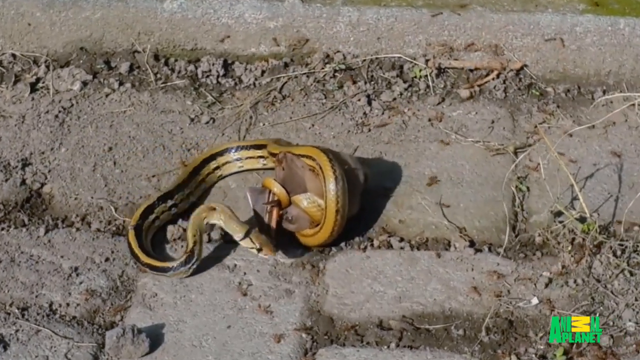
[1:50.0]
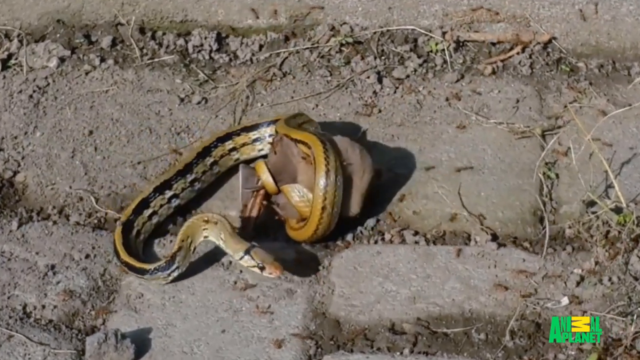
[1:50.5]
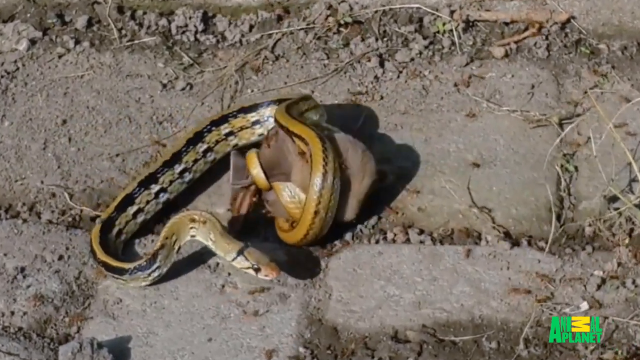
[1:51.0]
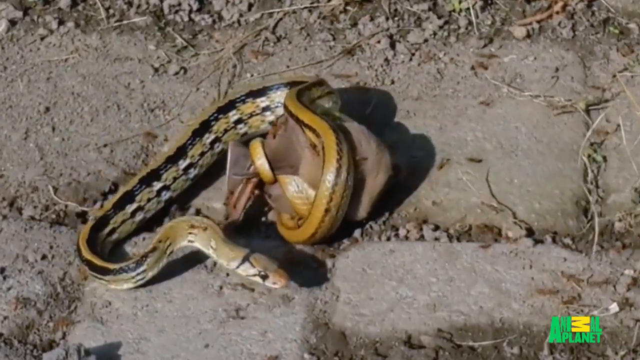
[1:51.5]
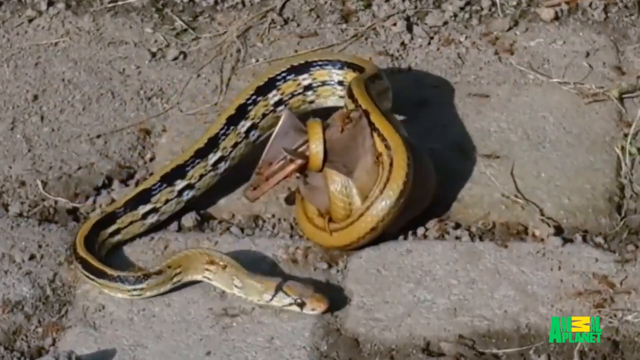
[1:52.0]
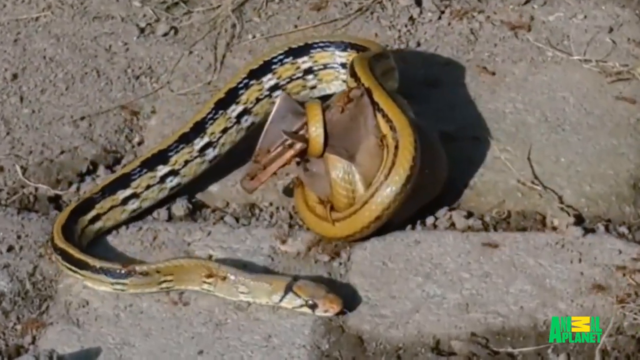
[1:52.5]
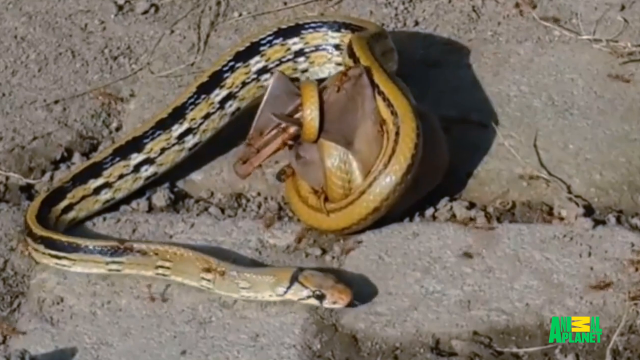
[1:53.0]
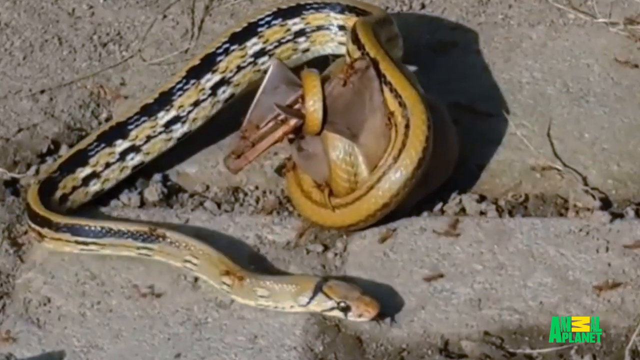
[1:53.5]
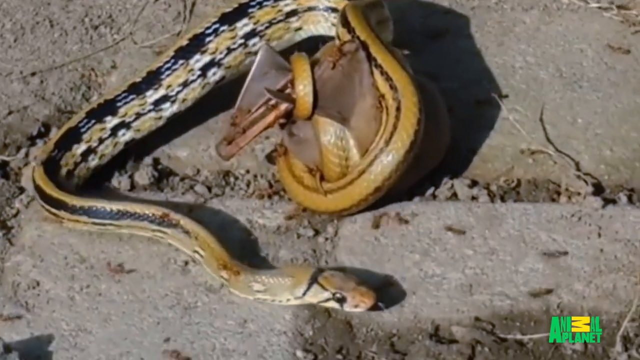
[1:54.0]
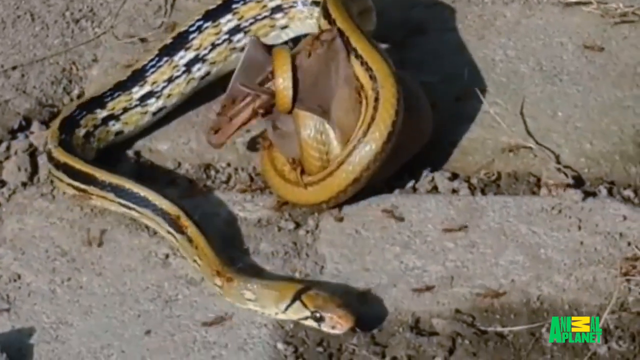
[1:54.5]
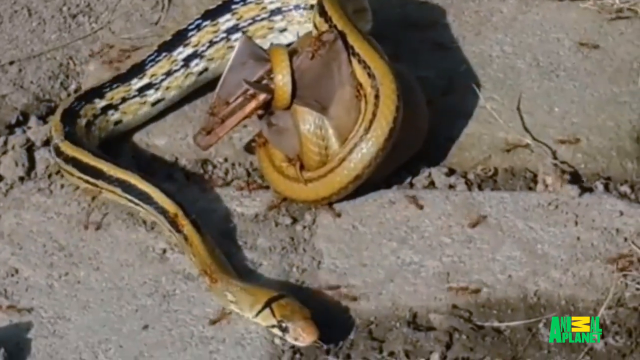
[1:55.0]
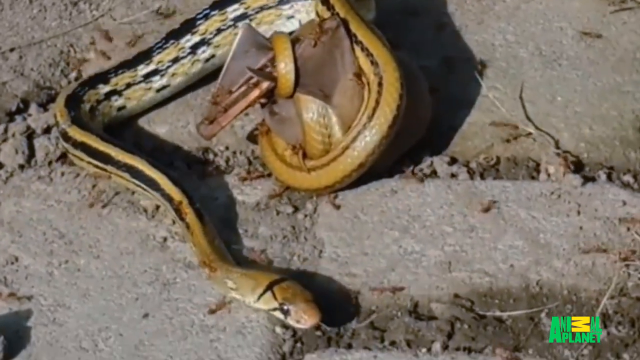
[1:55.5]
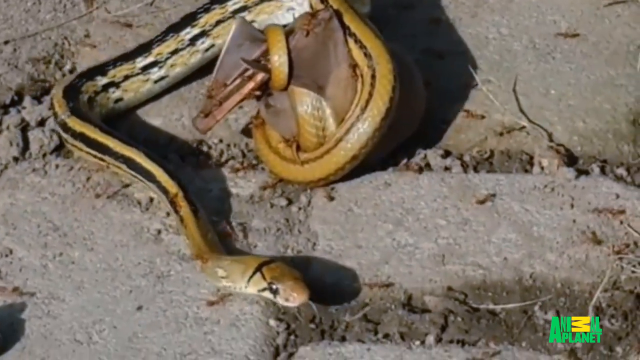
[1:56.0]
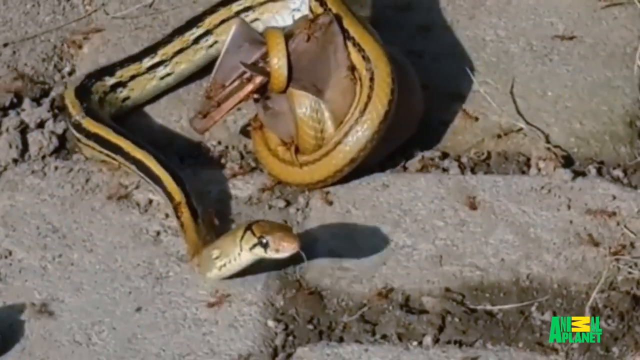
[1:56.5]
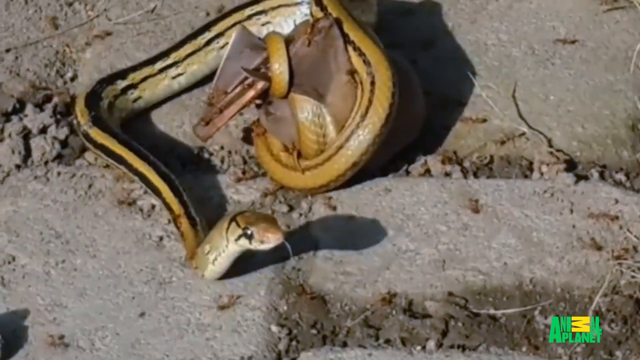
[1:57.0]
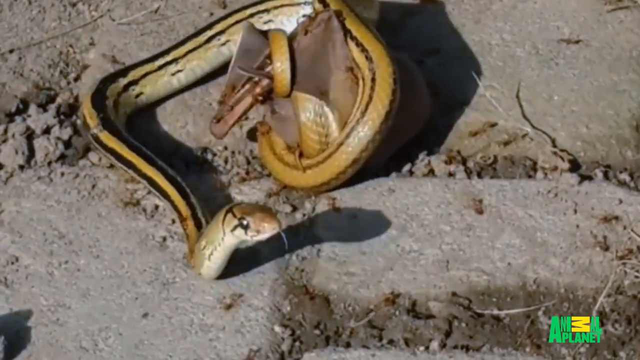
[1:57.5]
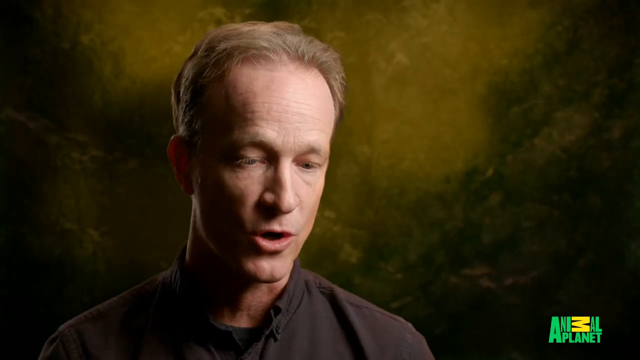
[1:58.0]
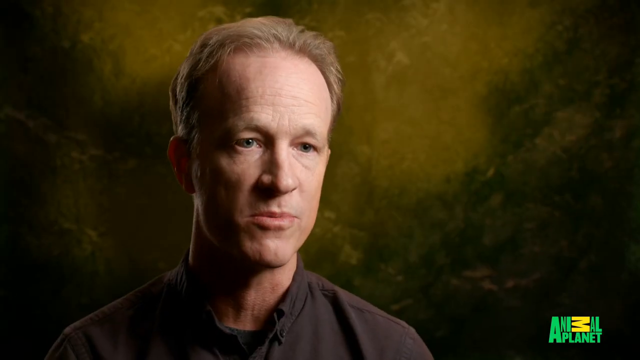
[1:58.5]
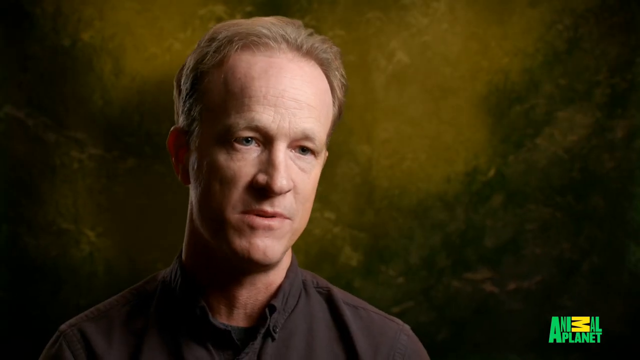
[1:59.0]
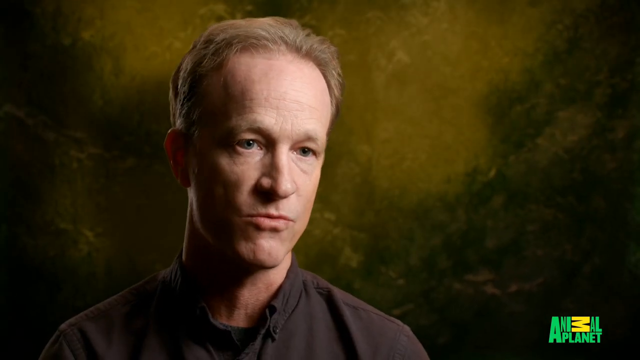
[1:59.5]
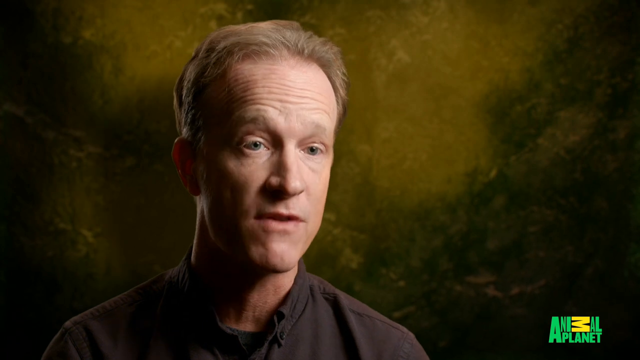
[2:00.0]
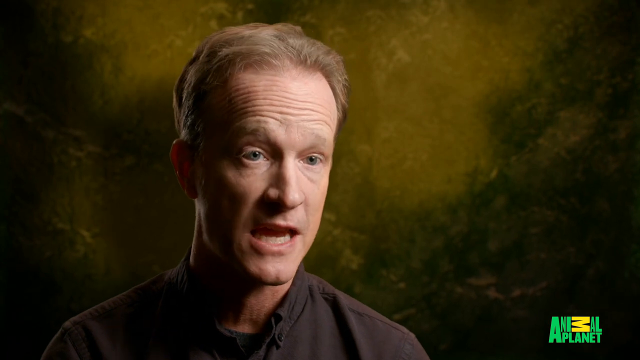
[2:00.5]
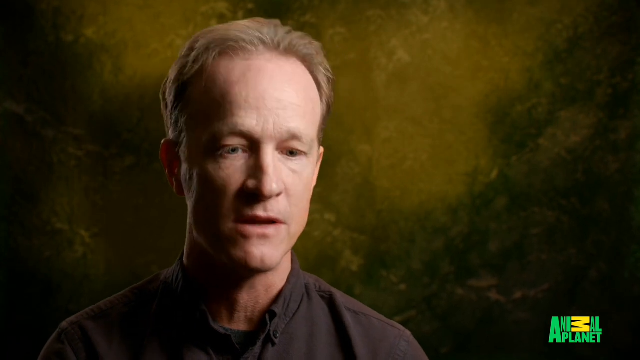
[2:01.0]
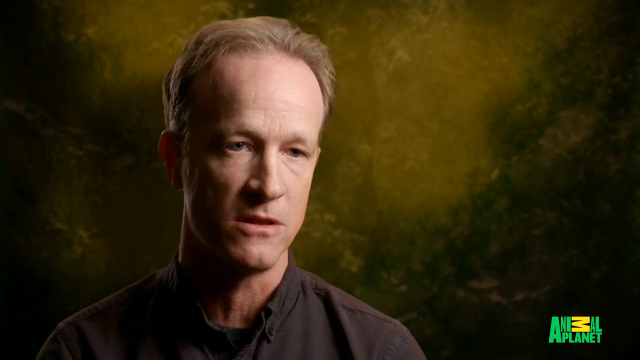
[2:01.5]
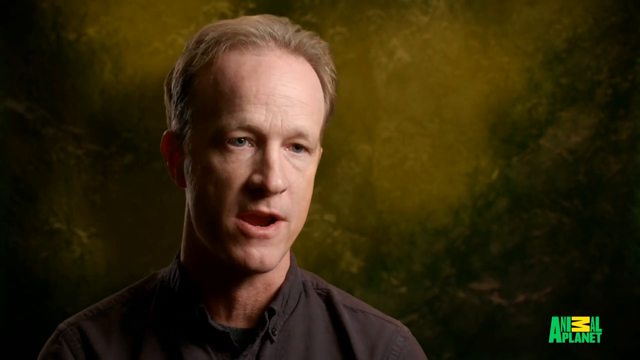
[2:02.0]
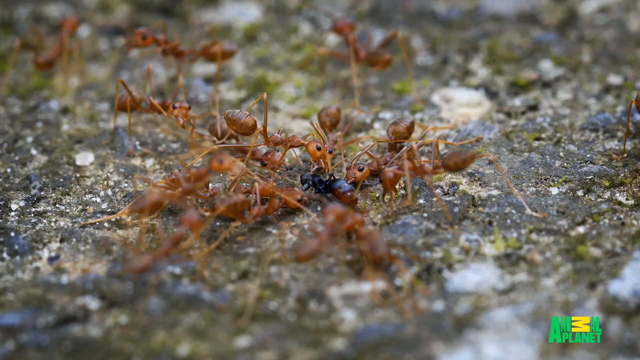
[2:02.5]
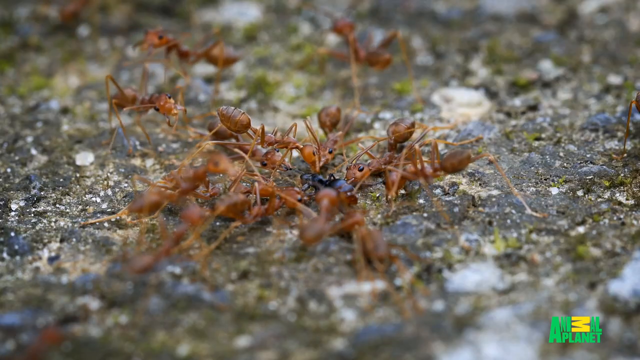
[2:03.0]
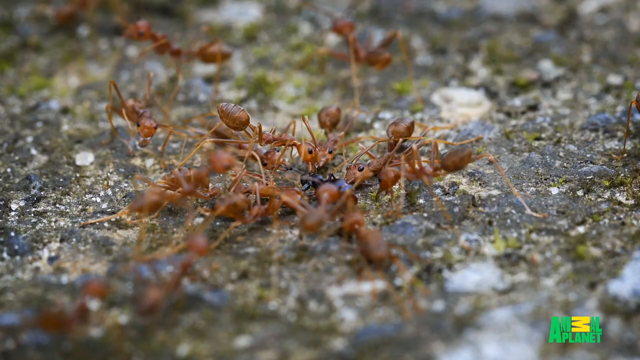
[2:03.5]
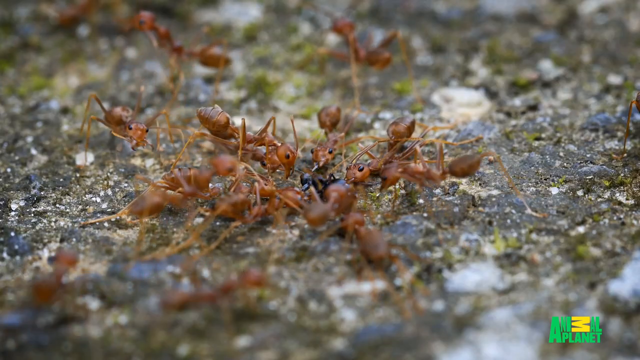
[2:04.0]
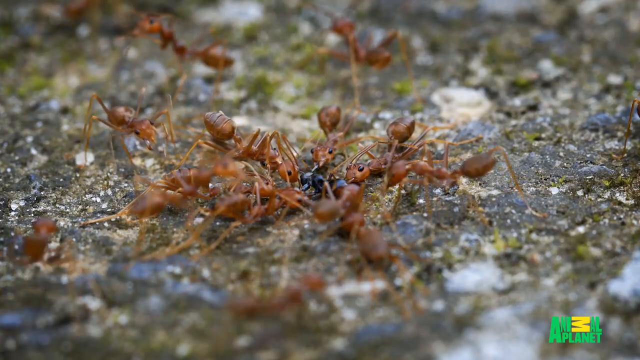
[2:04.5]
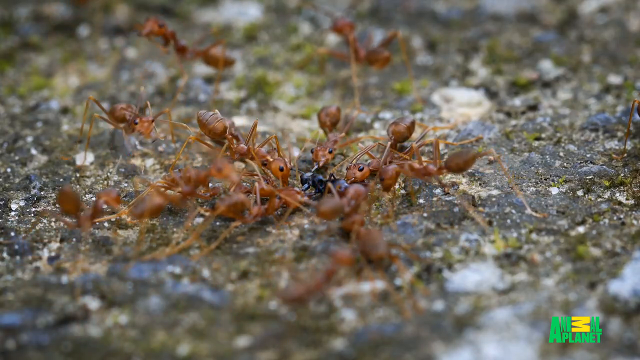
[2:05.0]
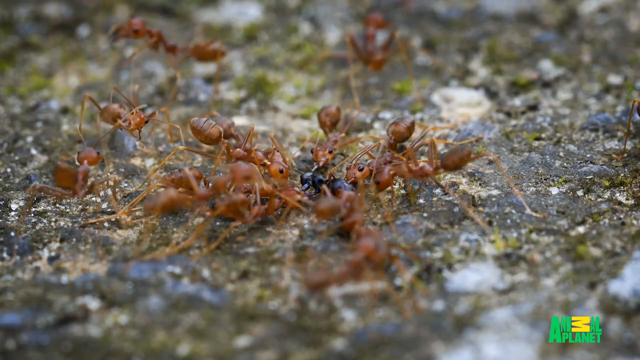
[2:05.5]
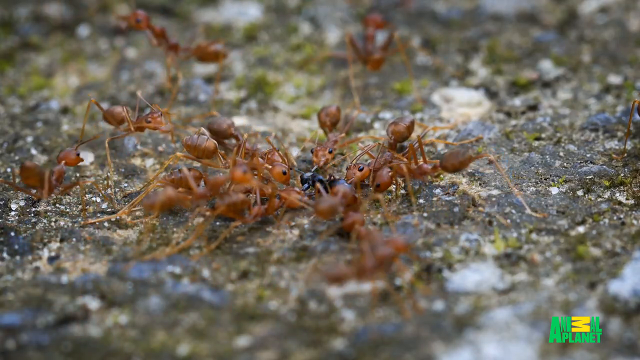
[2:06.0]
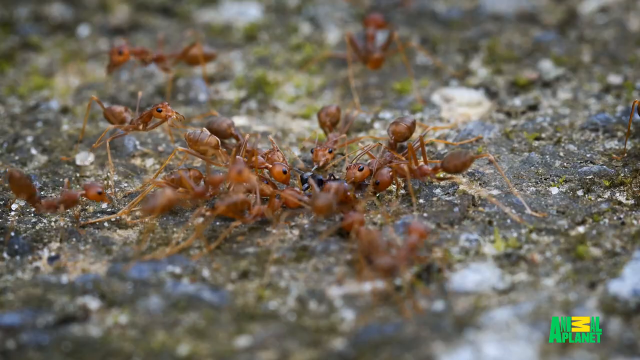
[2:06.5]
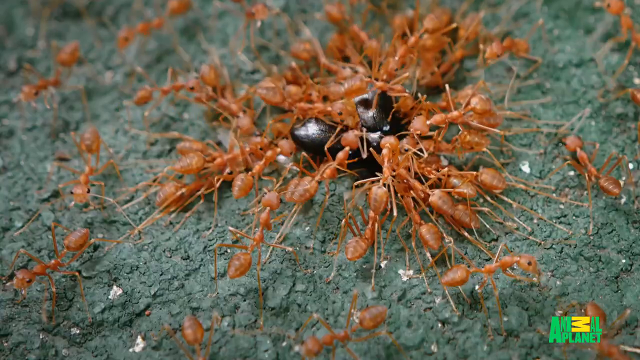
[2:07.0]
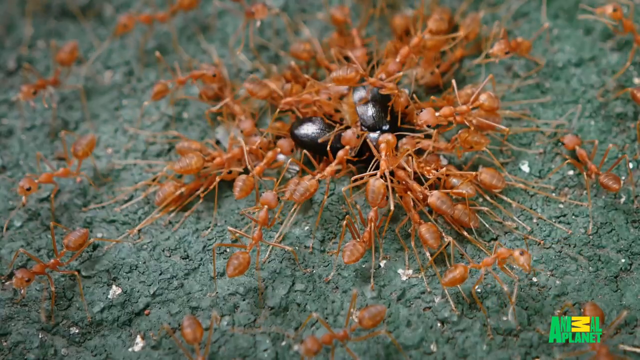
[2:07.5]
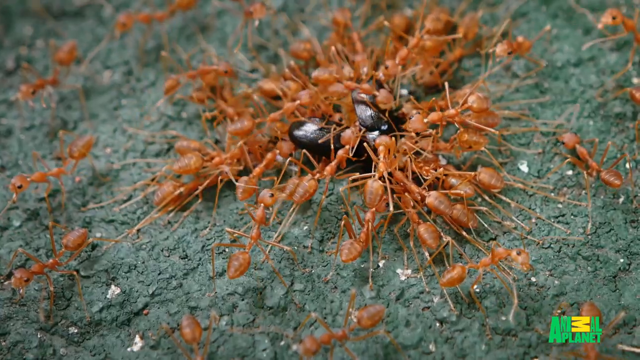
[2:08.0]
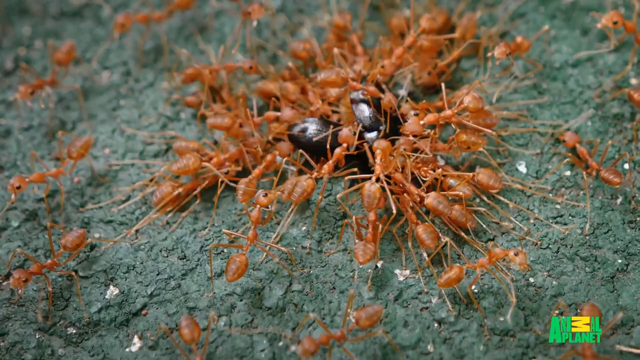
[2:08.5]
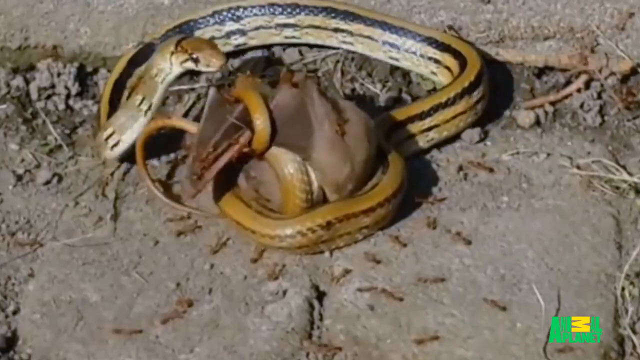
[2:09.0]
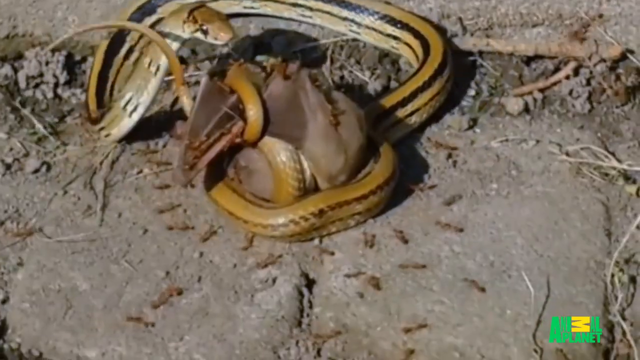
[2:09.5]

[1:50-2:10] On the Animal Planet Network, a yellow constrictor-type snake with black markings is wrapped up around a bat, with ants crawling all over the bat. The video switches back and forth between this scene and another in which tons of copper-colored ants are killing a black insect that appears to be a beetle or something. It also cuts back and forth to the commentator. An Animal Planet logo is in the bottom right corner.